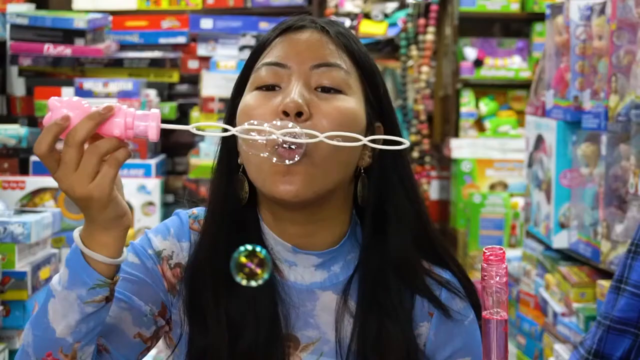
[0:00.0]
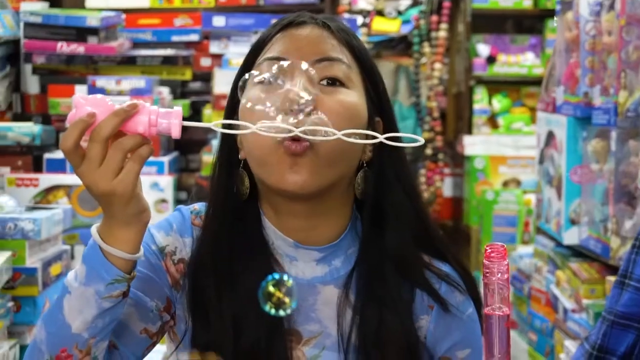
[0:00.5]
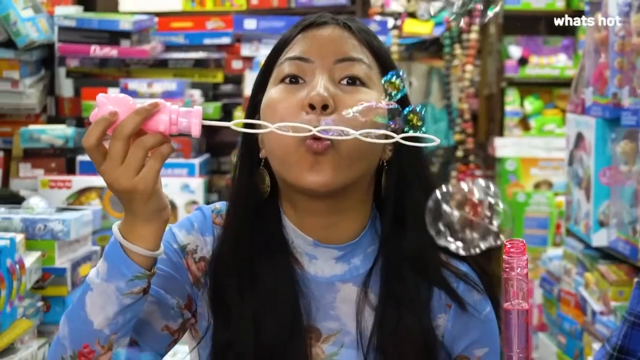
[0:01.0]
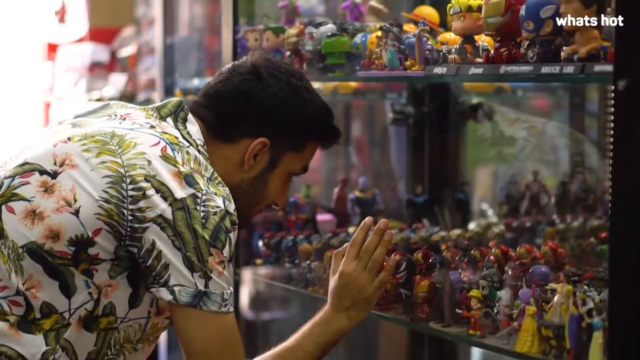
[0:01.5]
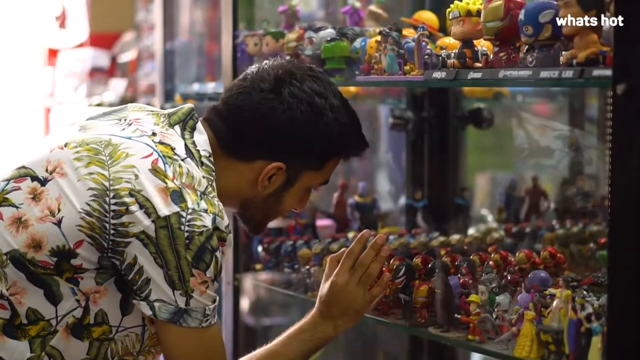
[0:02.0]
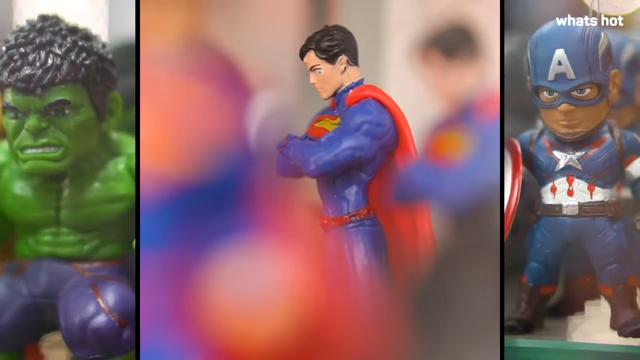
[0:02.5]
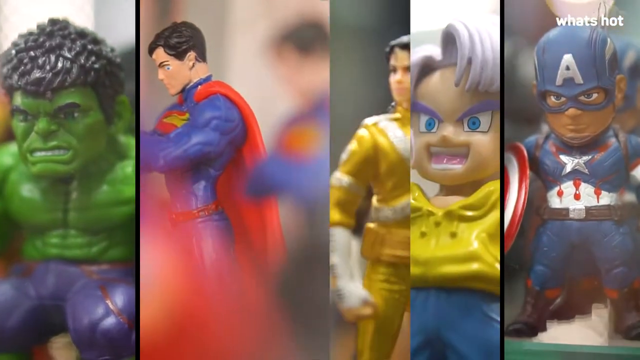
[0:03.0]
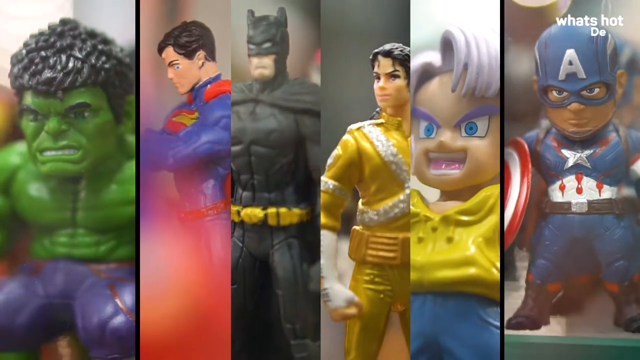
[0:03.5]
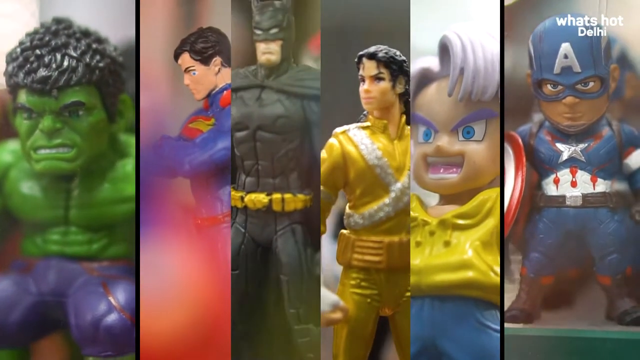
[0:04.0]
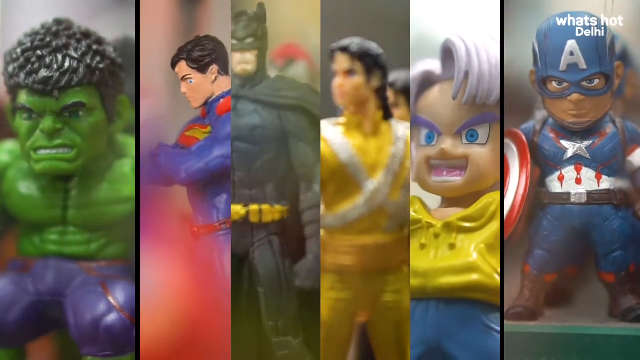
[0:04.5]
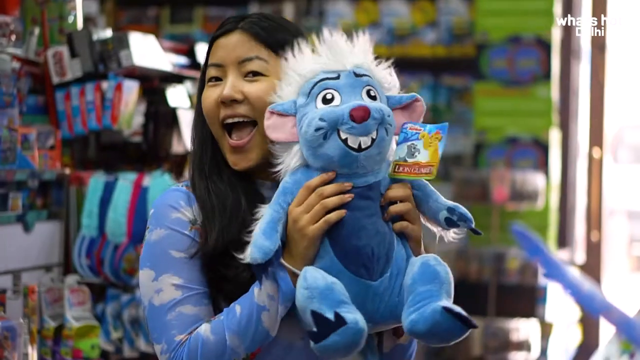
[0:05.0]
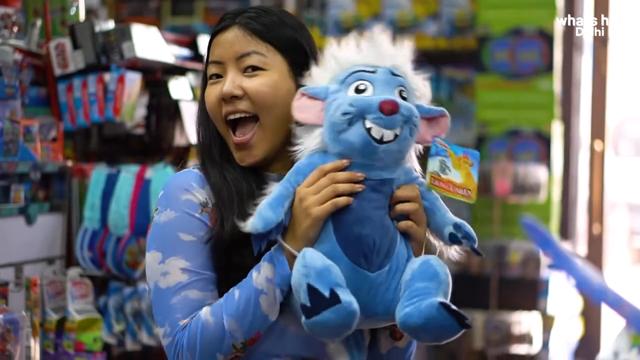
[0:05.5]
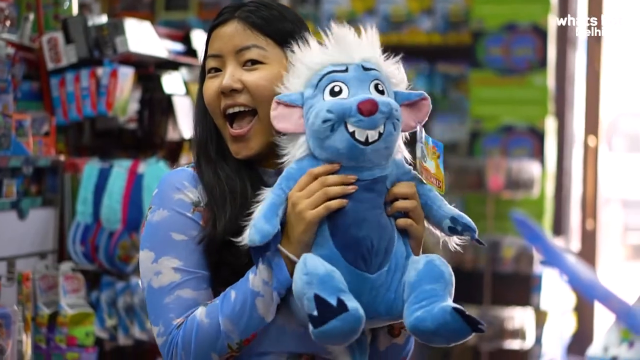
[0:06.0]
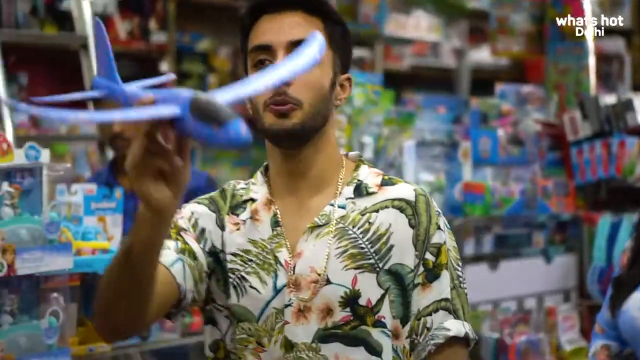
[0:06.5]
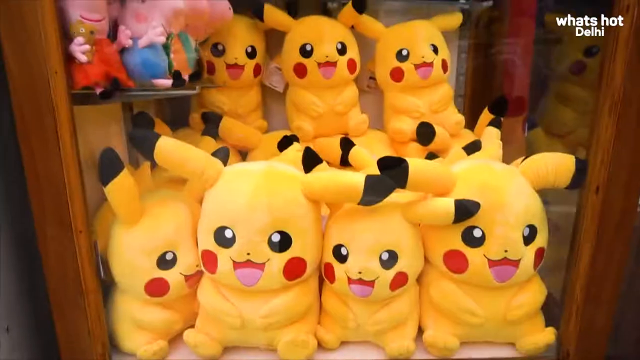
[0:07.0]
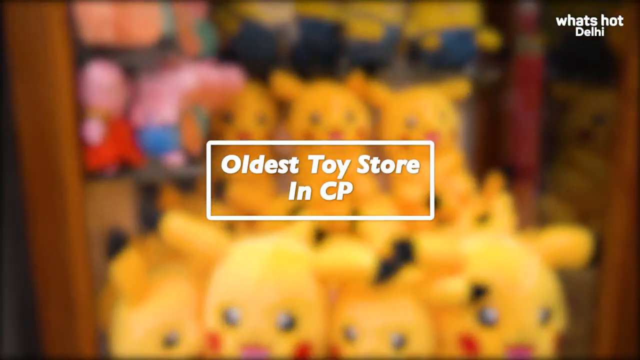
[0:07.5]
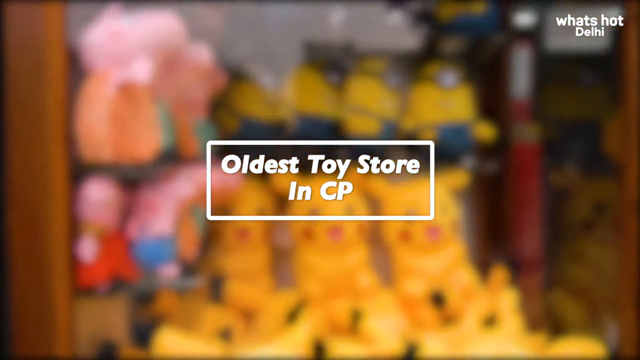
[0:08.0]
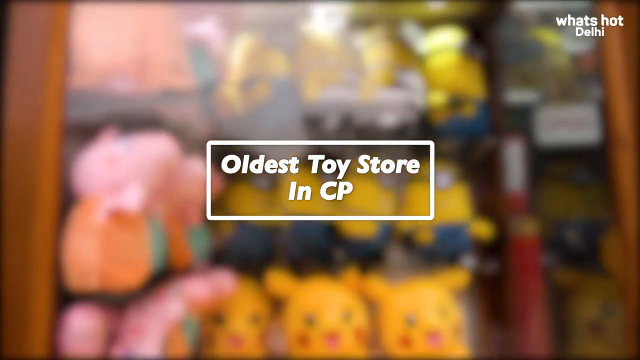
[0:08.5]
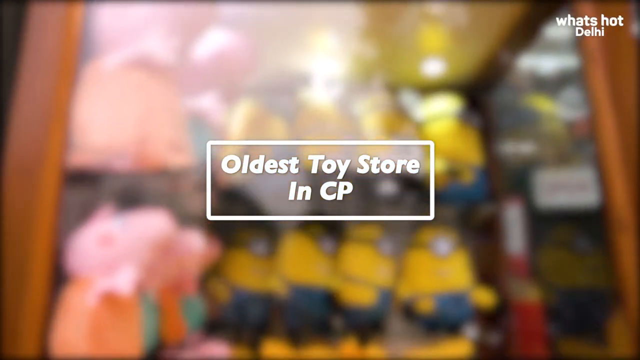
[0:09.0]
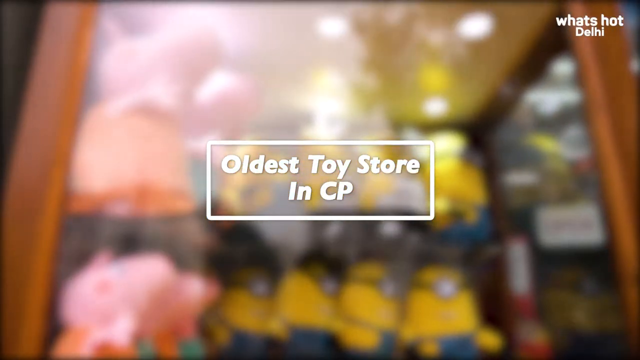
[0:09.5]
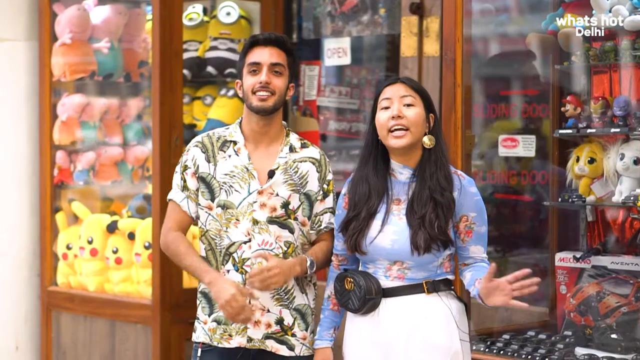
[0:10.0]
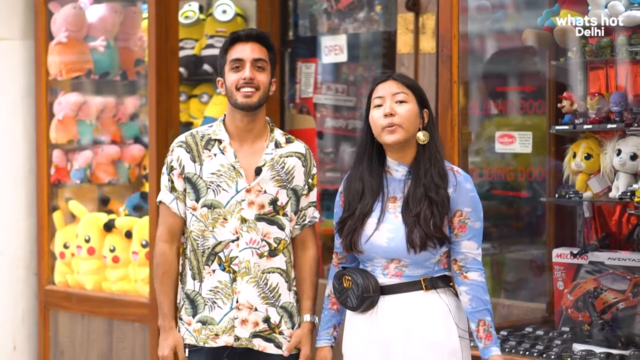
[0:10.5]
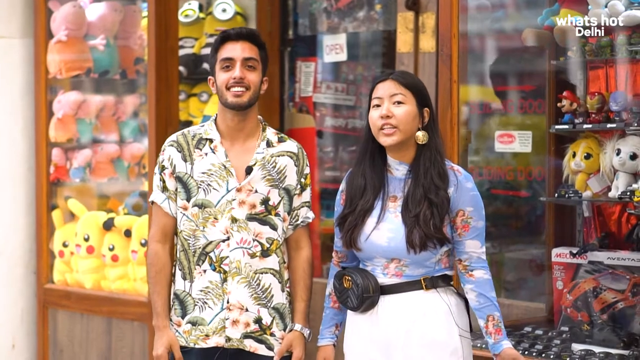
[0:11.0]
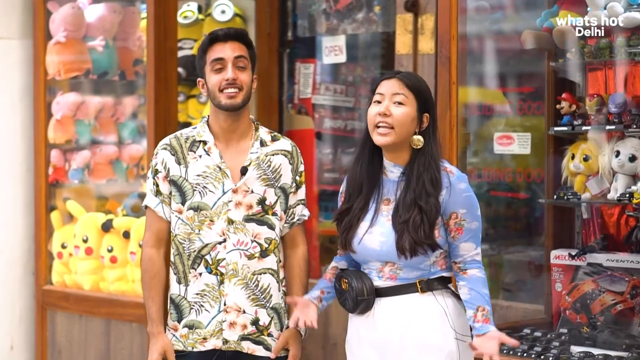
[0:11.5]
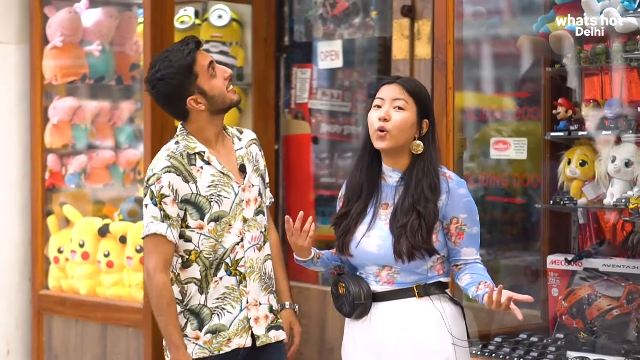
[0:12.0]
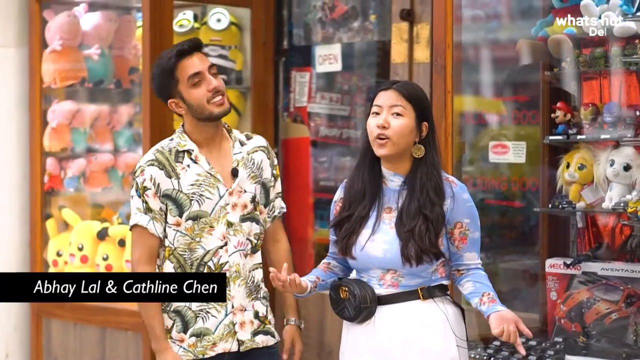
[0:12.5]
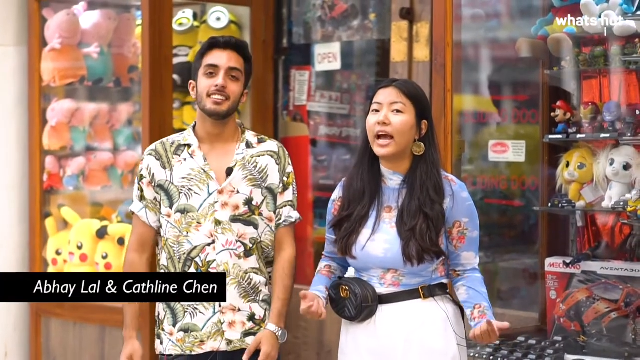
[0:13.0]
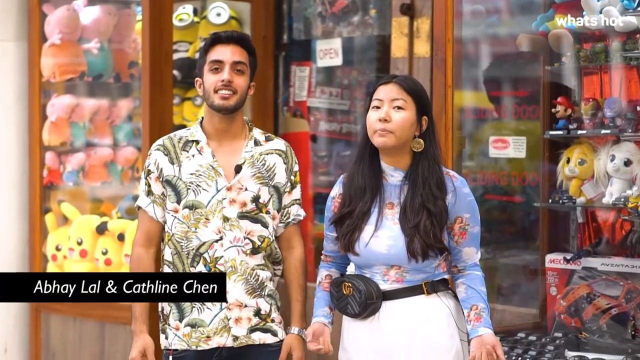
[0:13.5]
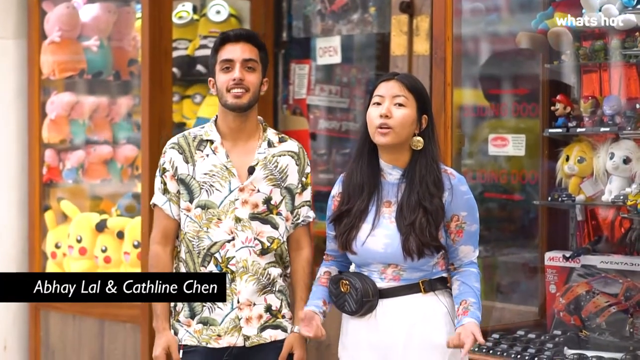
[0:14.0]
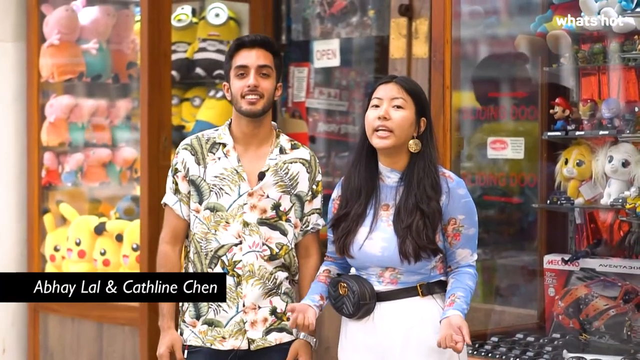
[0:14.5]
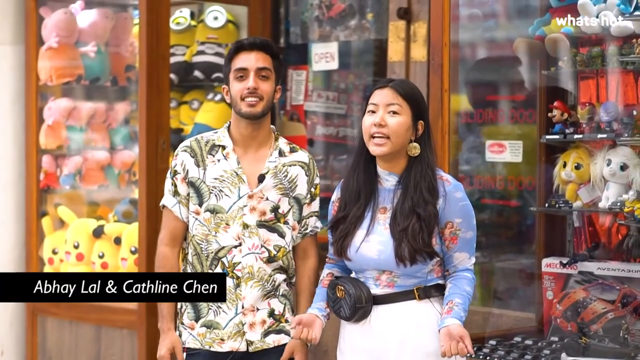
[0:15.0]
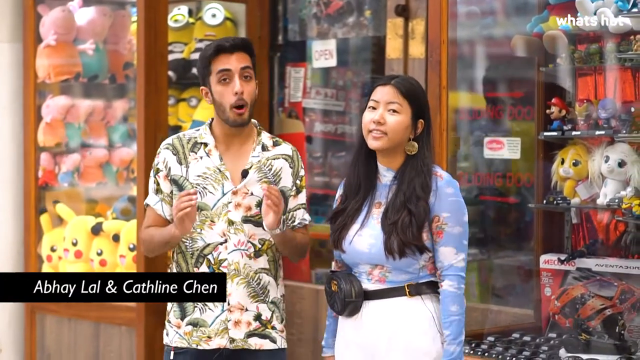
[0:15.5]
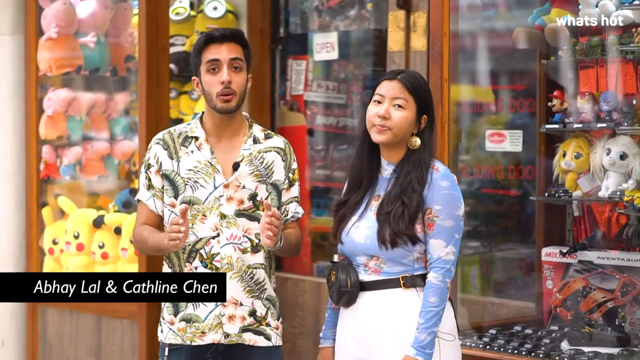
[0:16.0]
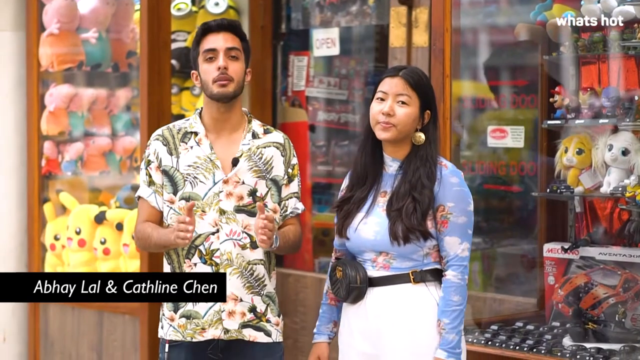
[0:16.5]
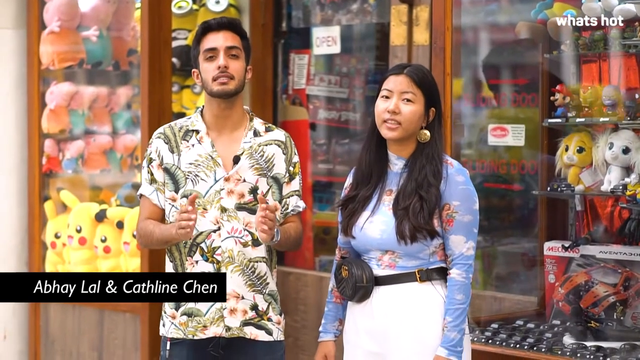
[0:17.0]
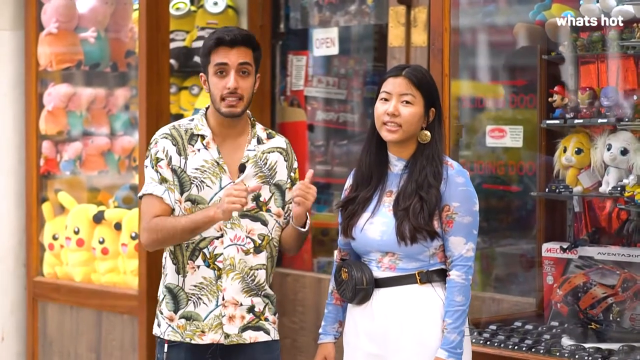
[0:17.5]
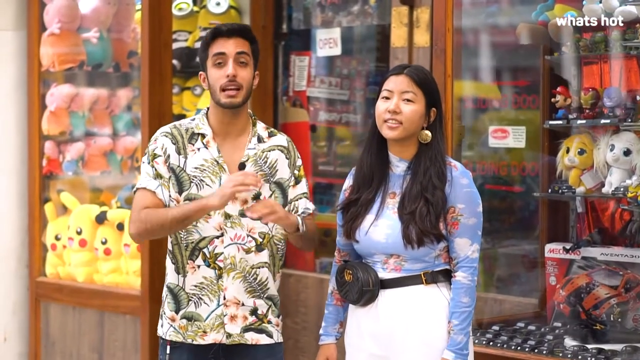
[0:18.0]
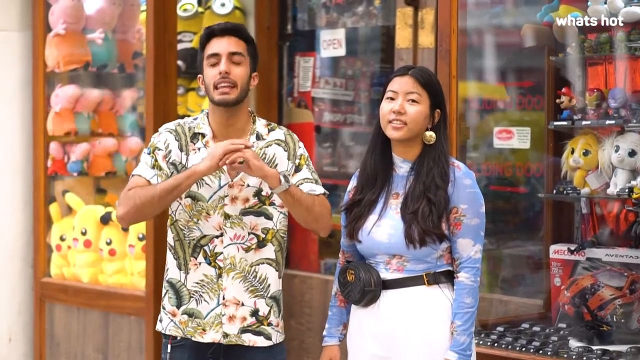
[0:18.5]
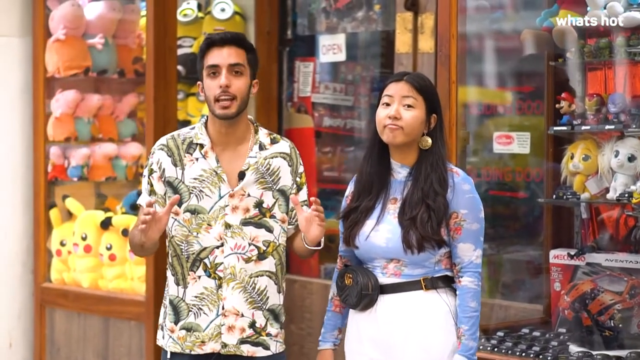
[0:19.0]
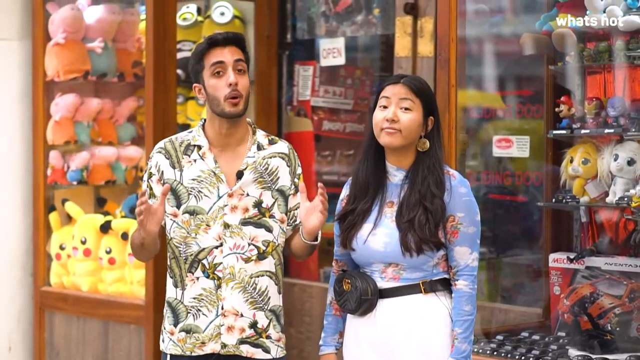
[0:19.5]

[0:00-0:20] A woman with black hair and earrings appears, seemingly of some sort of Asian descent and apparently between 20 and 25 years old. She seems to be playing with some sort of teddy bear, which is blue. On-screen text refers to the oldest toy store, and at the top right the text says "what's hot". The video shows around the store.